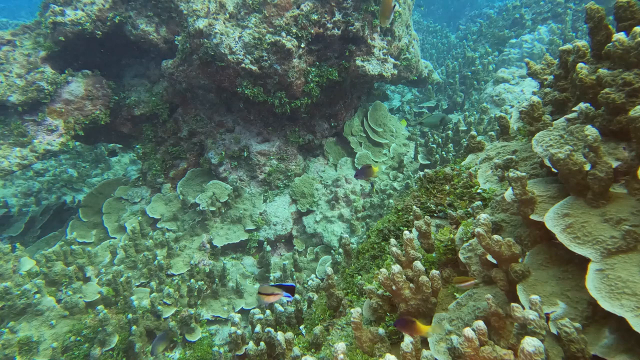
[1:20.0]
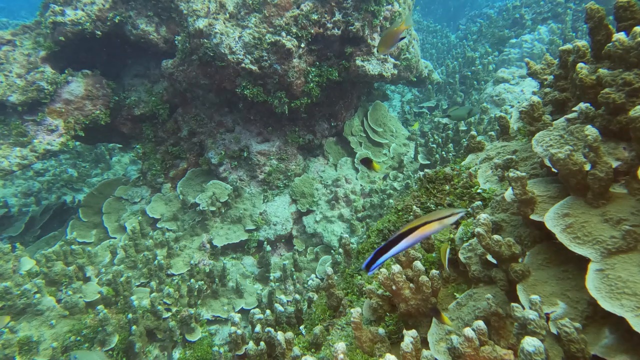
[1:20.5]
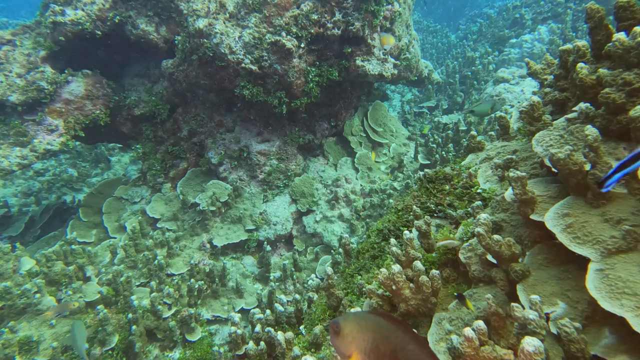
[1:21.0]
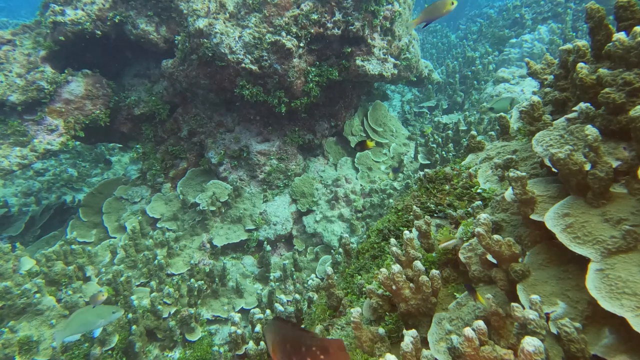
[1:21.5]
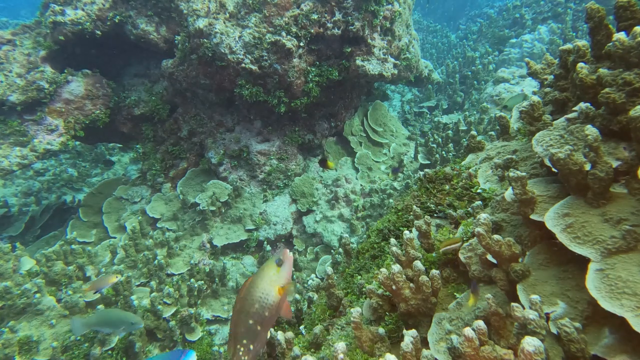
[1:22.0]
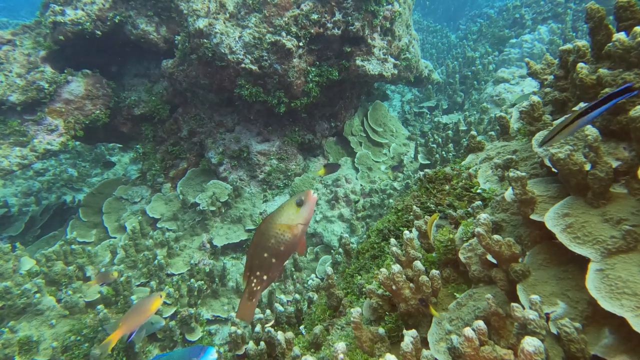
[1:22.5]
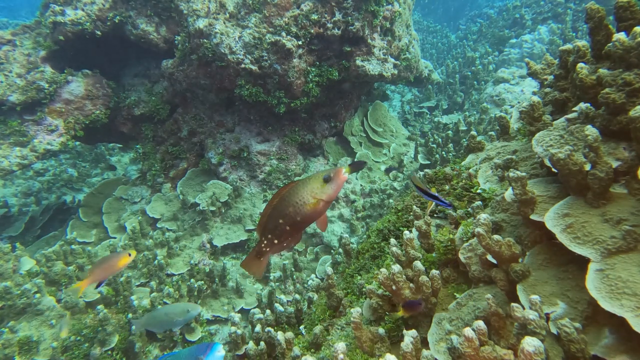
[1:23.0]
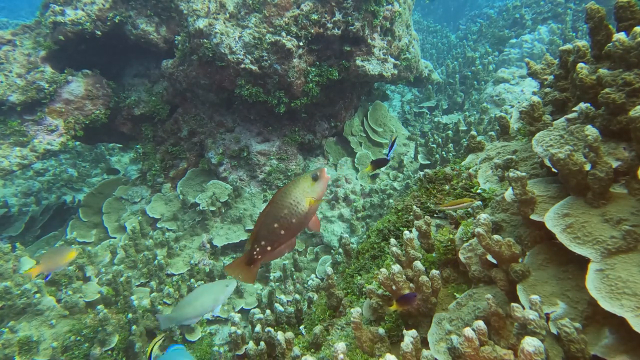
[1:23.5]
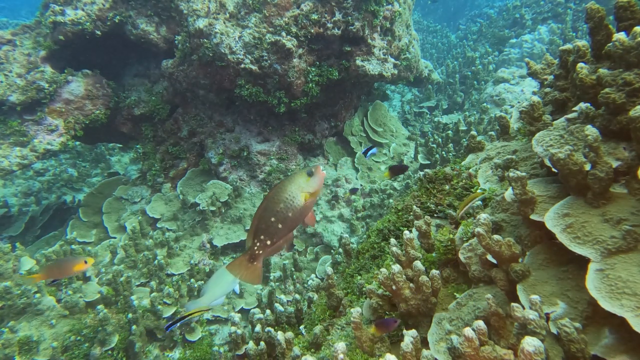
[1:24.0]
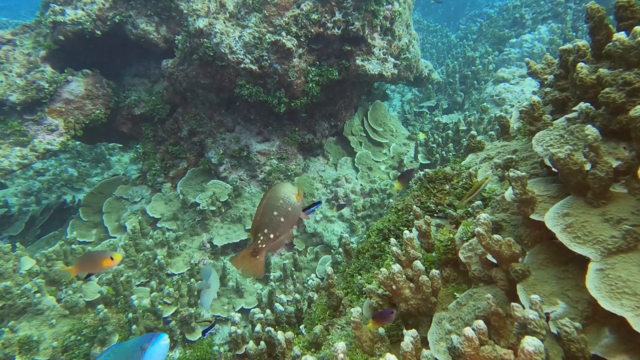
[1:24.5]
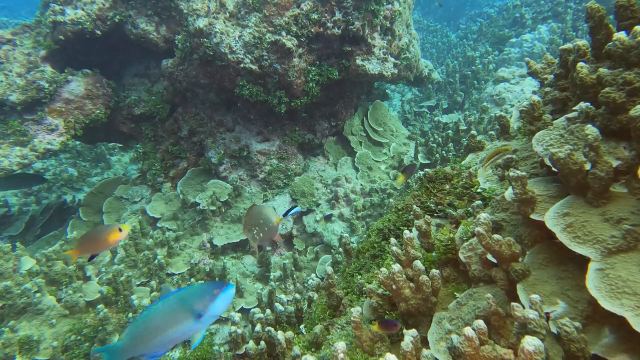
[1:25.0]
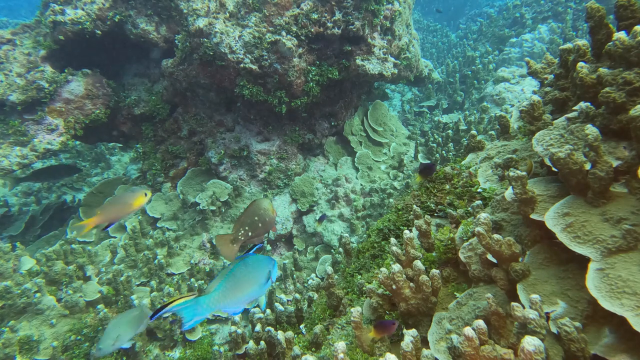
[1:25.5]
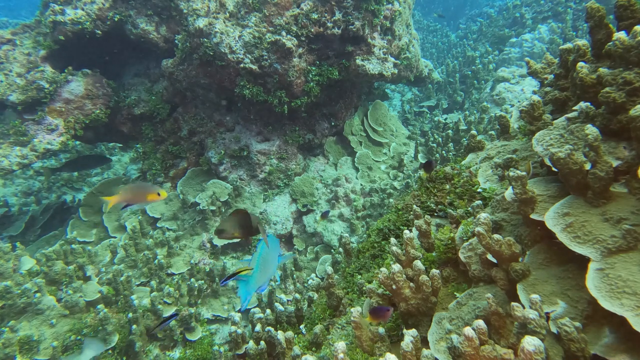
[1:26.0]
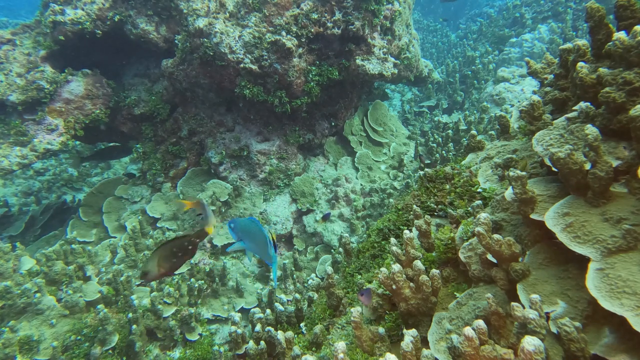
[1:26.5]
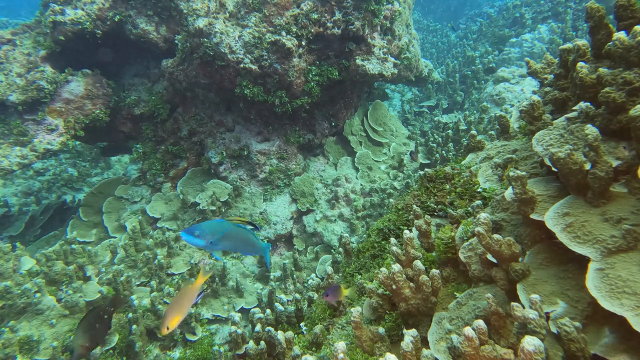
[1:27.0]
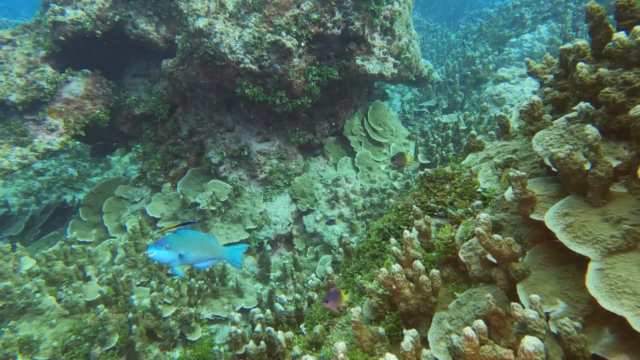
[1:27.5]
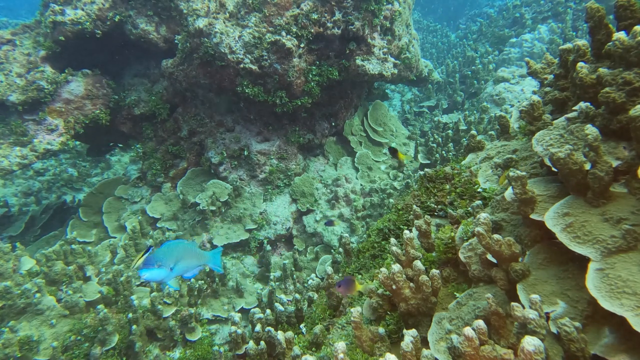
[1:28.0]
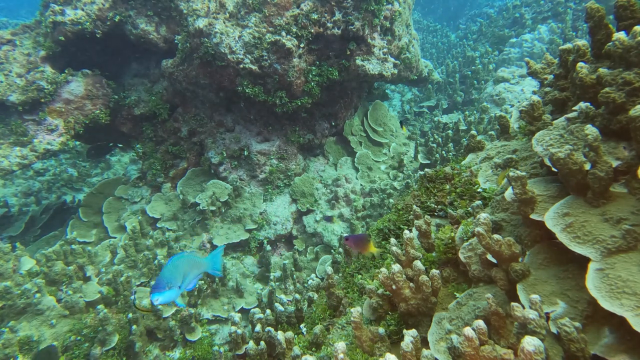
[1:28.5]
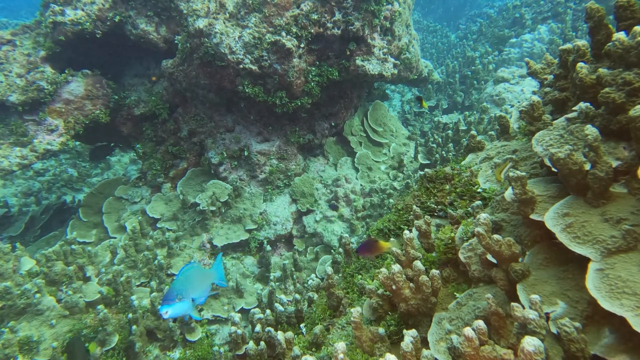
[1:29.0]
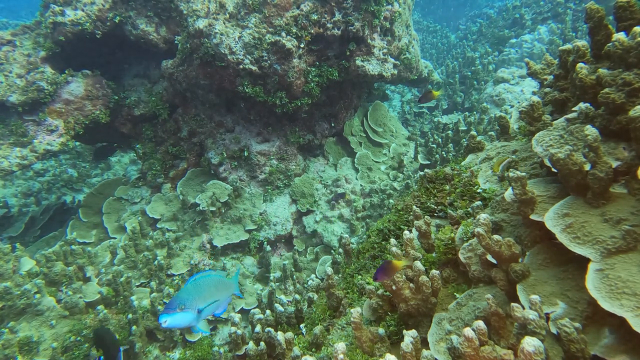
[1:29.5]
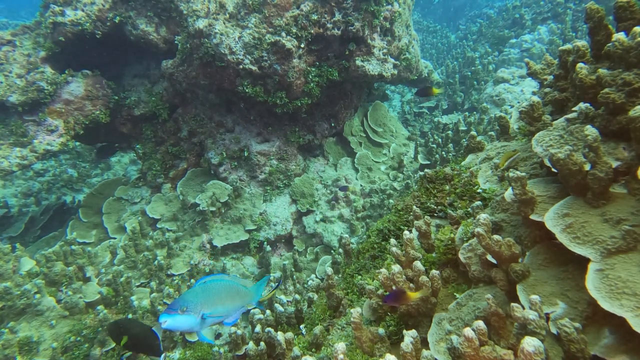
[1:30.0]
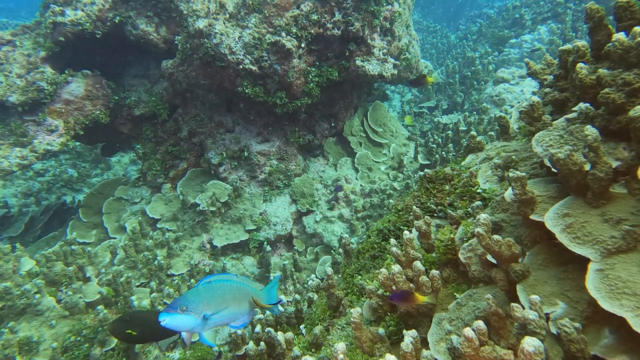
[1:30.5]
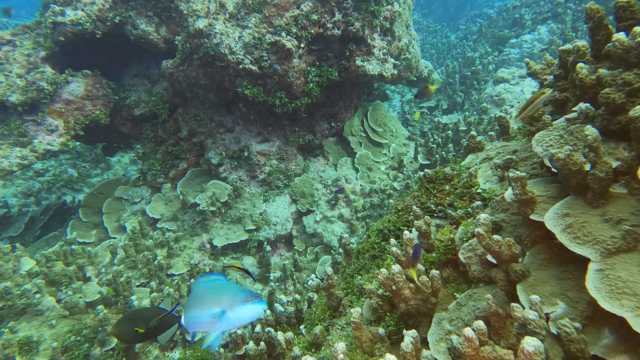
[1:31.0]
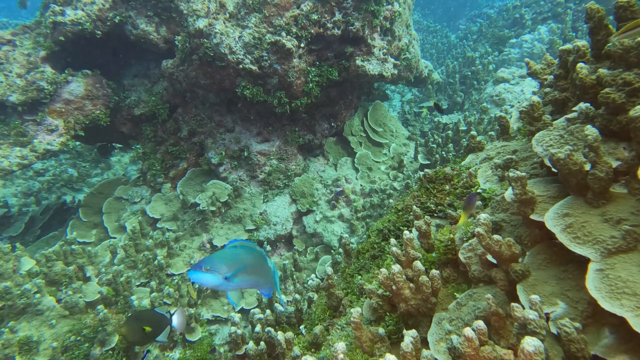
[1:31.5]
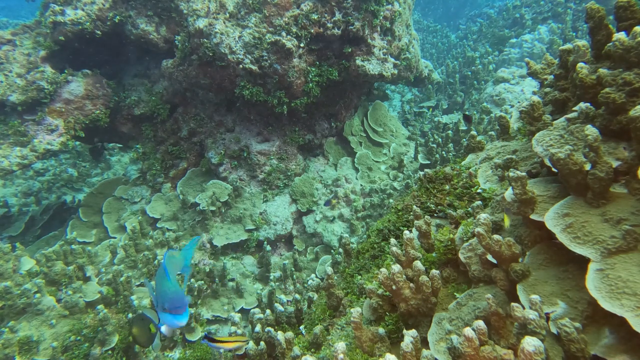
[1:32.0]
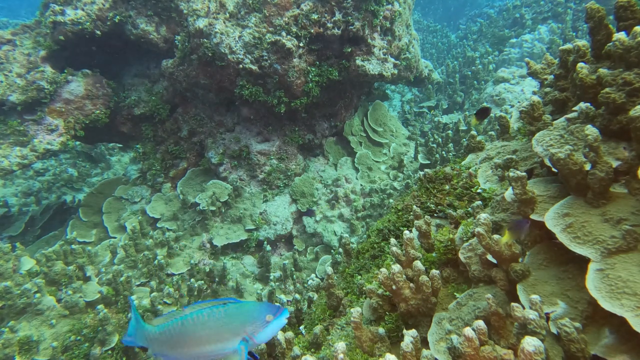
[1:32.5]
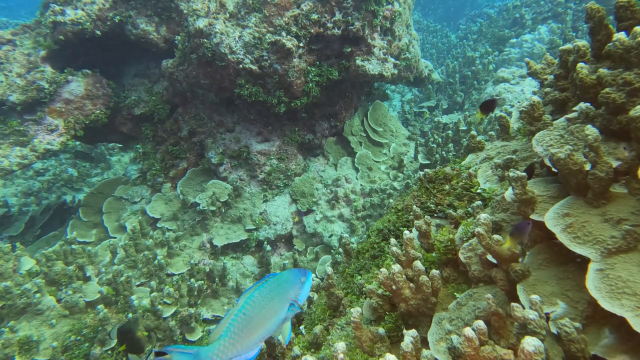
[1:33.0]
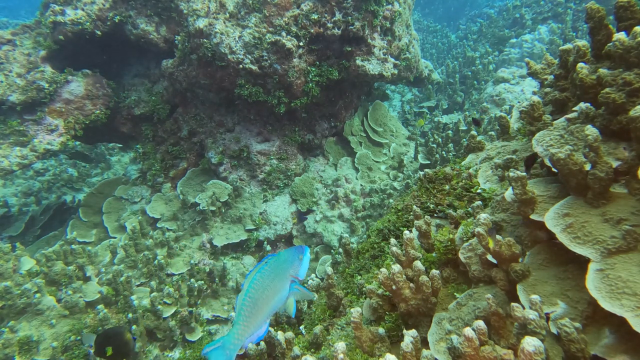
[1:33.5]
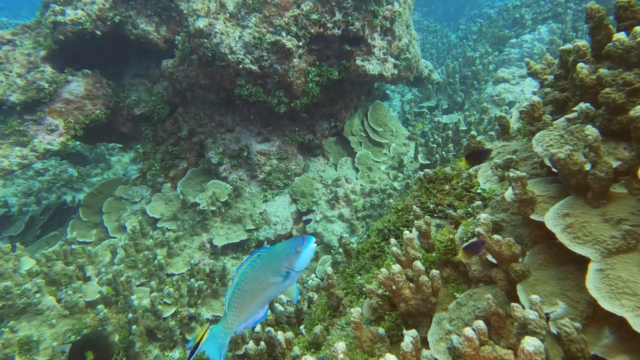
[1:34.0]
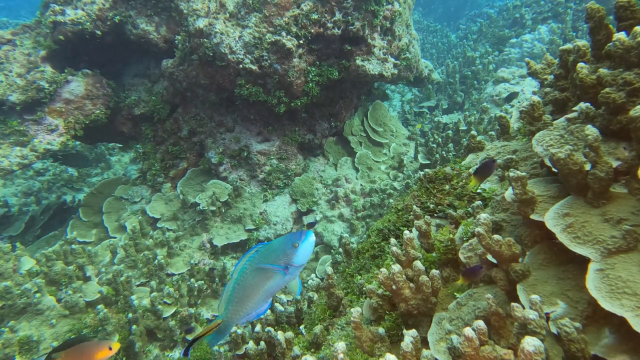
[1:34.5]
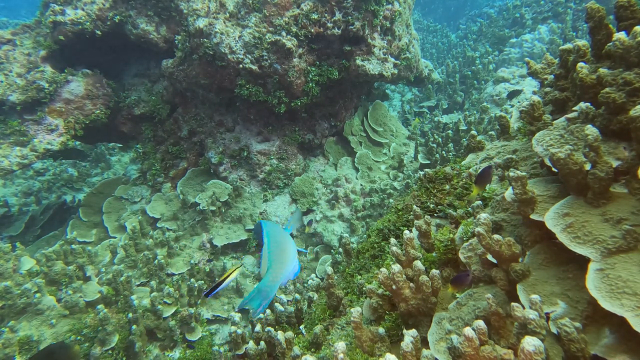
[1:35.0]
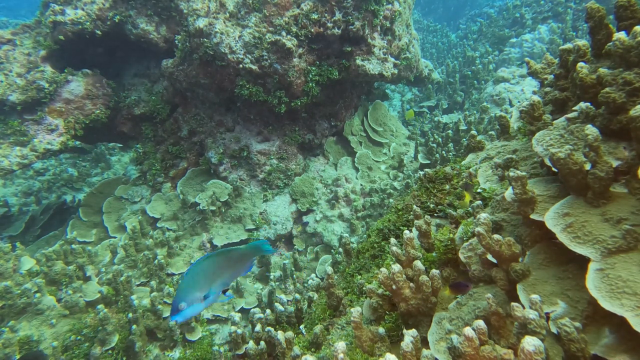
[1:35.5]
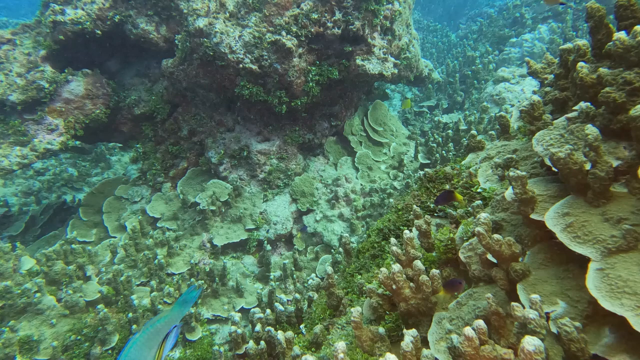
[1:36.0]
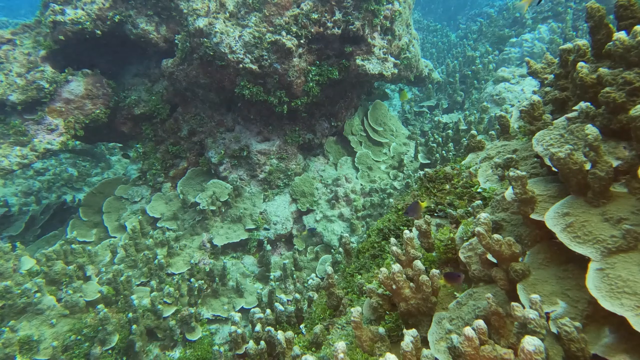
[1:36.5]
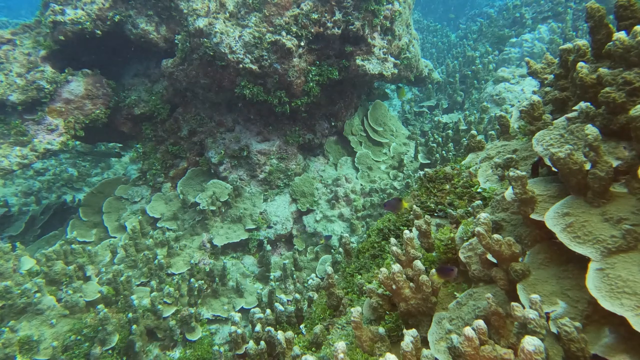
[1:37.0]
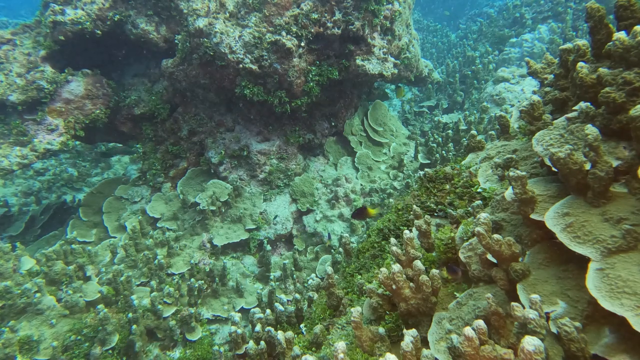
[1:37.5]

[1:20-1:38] Fish continue to swim around the reef, and the scene remains relatively peaceful. A larger, sort of red-brownish fish appears in the middle of the frame but does not stay long before swimming away. The bright blue fish appears once again and stays in the middle of the frame for quite a while; it is multiple shades of blue, and none of the other fish are as blue or as bright. One of the smaller fish, which is yellow, blue and black, follows it very closely and appears to perhaps be eating something off of the blue fish, though it is unclear what exactly it is doing.